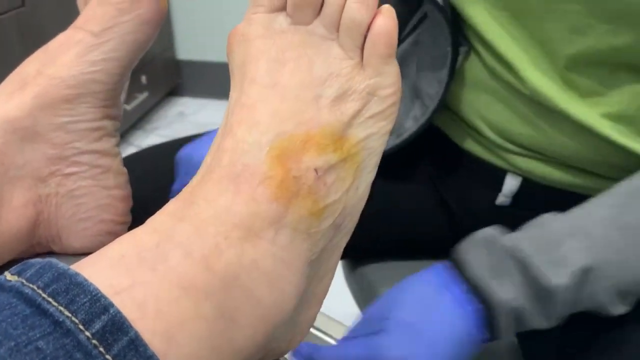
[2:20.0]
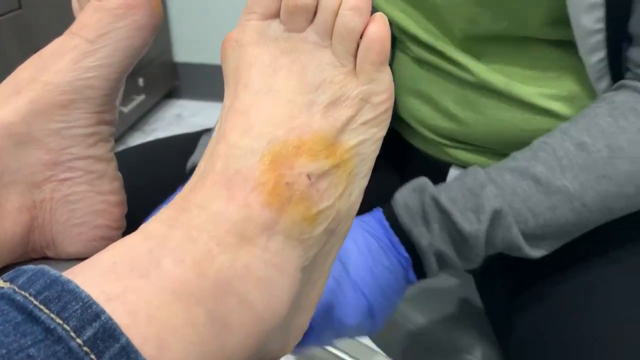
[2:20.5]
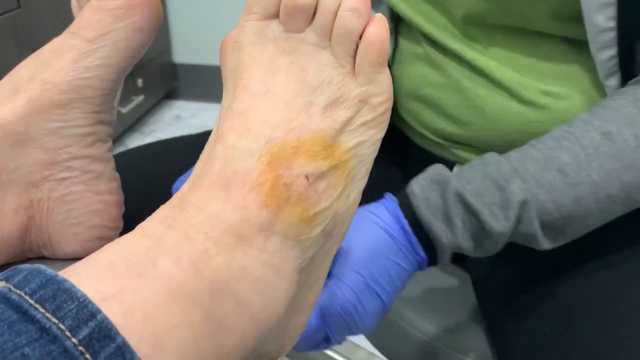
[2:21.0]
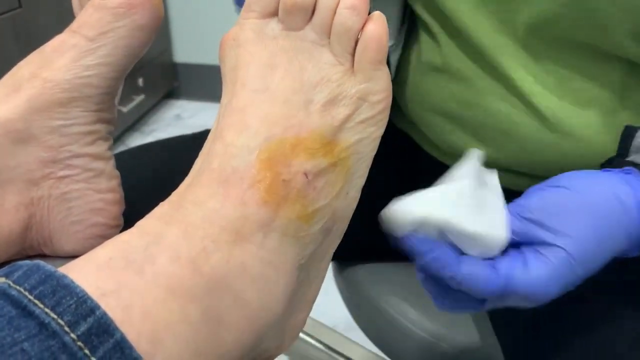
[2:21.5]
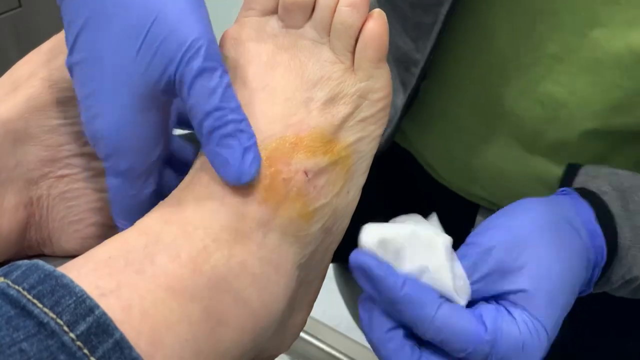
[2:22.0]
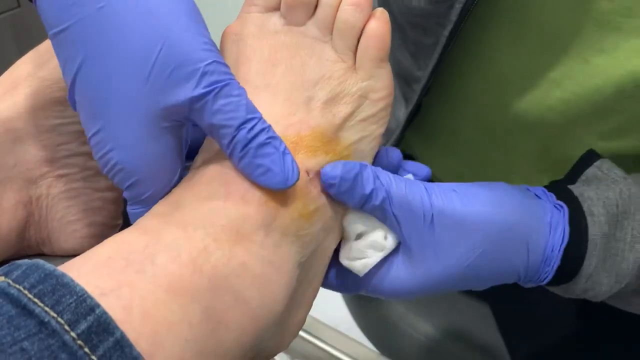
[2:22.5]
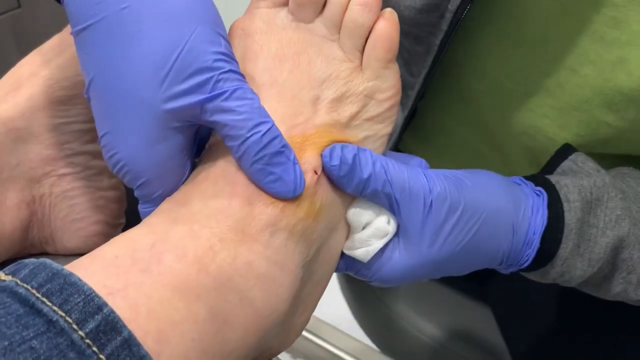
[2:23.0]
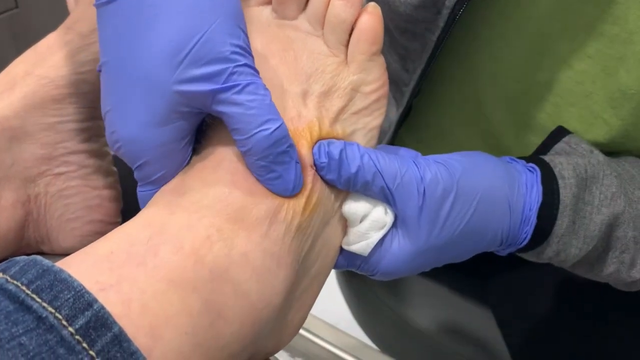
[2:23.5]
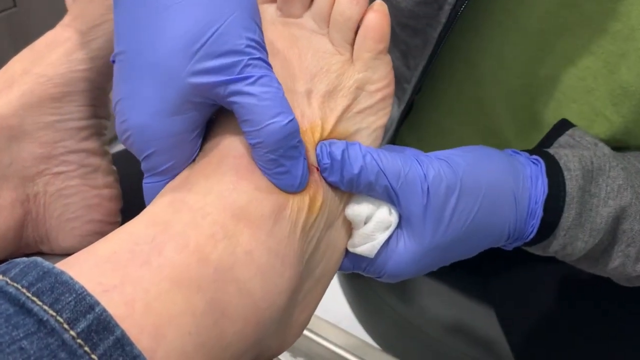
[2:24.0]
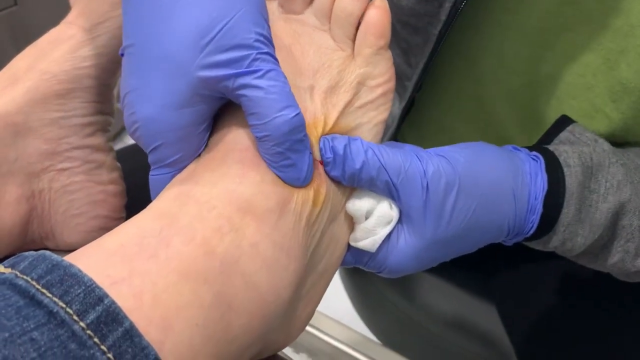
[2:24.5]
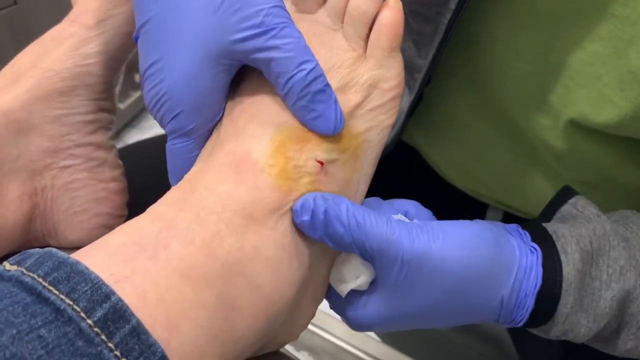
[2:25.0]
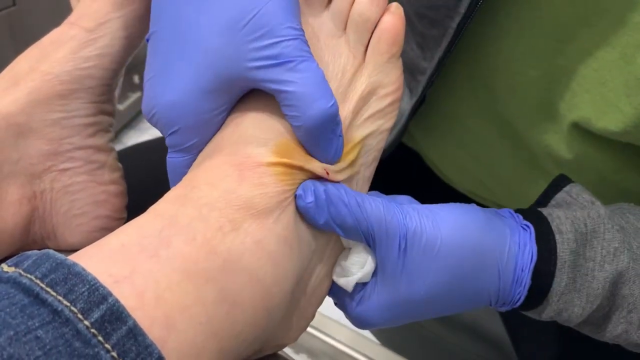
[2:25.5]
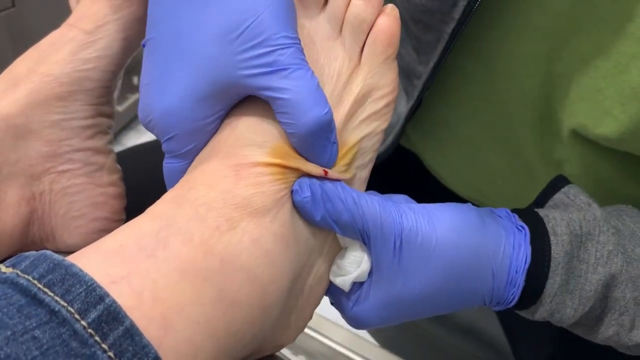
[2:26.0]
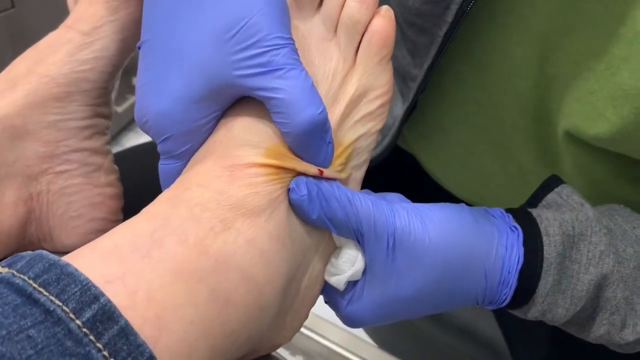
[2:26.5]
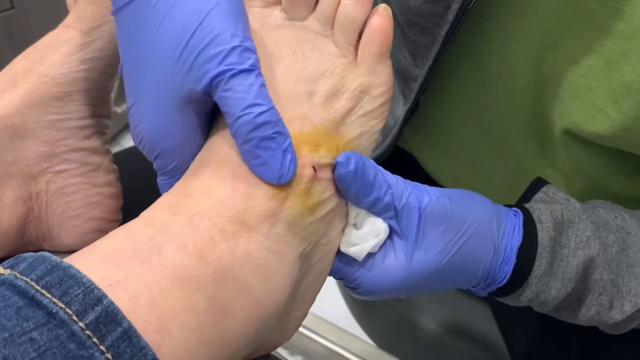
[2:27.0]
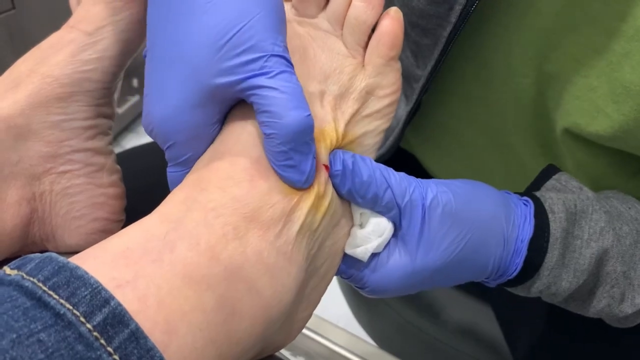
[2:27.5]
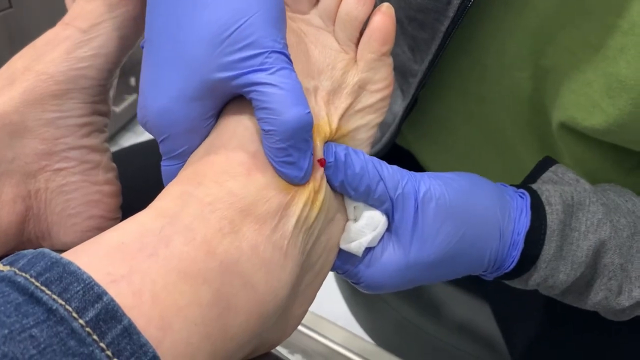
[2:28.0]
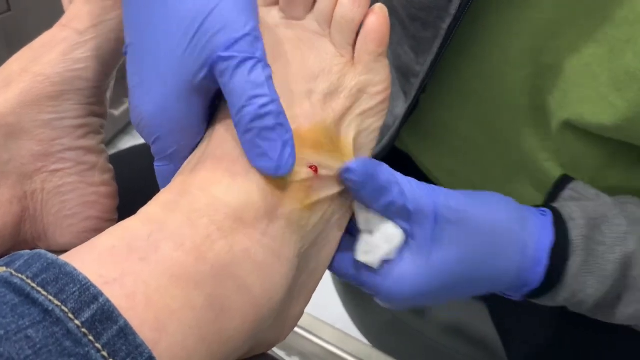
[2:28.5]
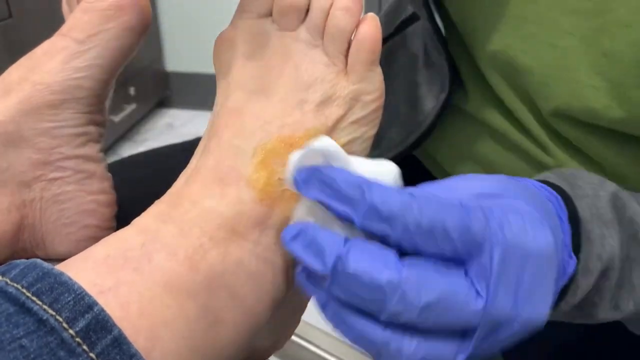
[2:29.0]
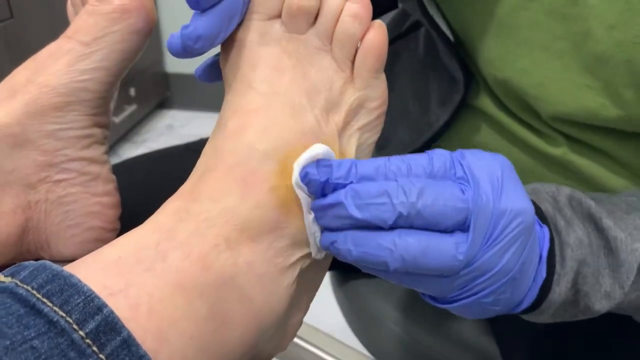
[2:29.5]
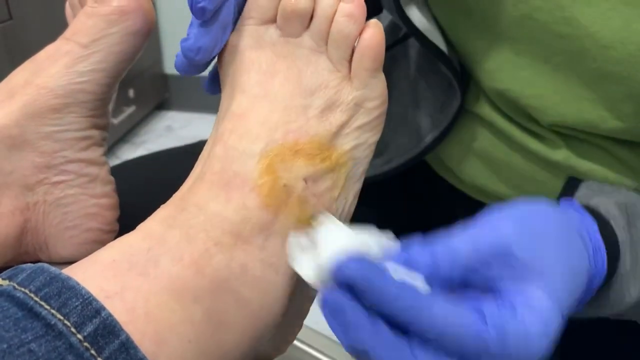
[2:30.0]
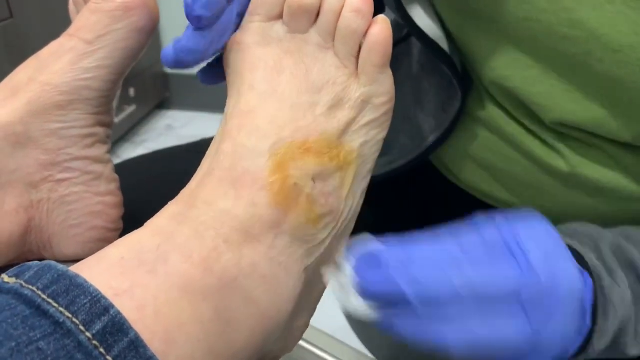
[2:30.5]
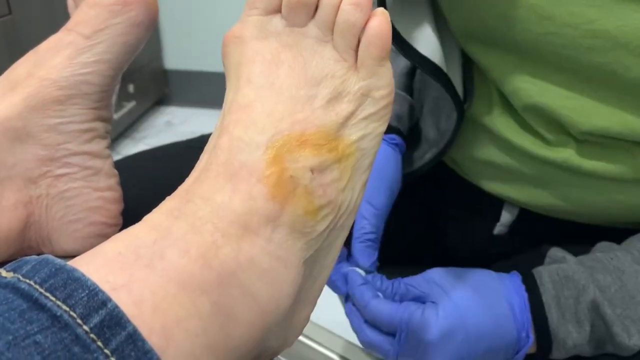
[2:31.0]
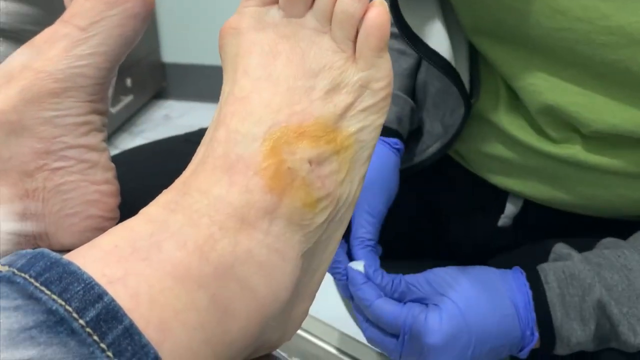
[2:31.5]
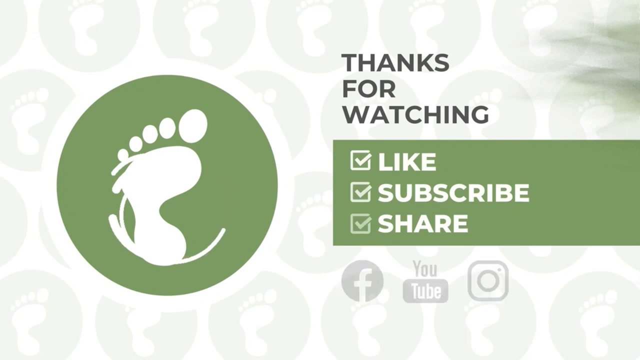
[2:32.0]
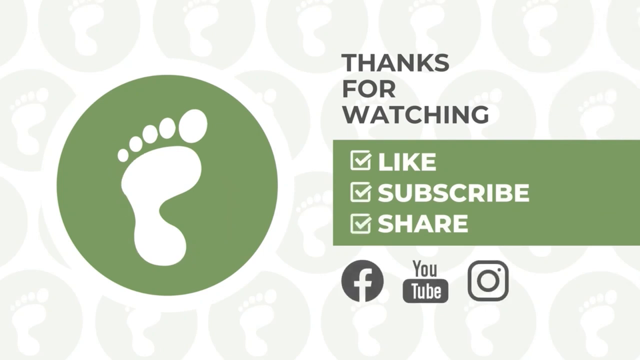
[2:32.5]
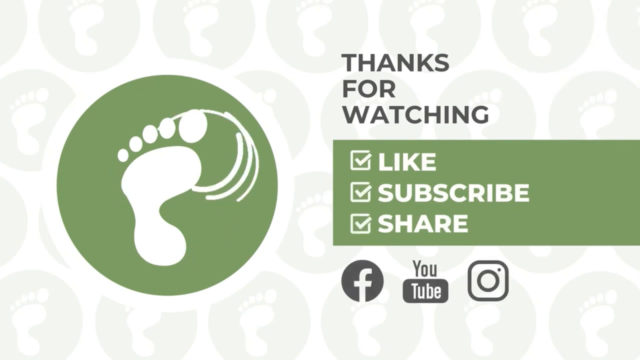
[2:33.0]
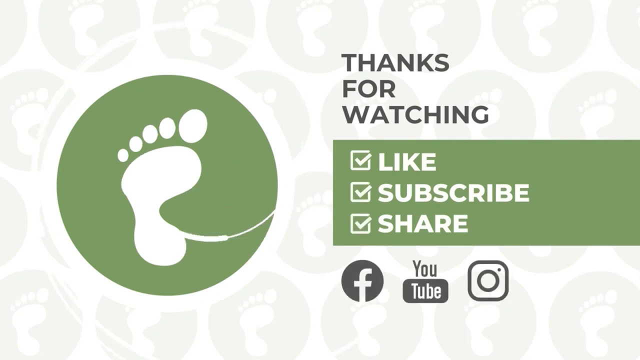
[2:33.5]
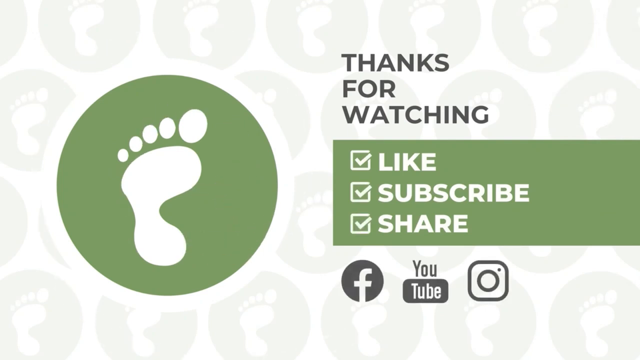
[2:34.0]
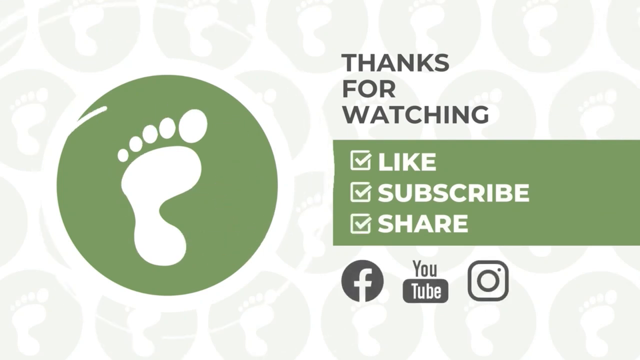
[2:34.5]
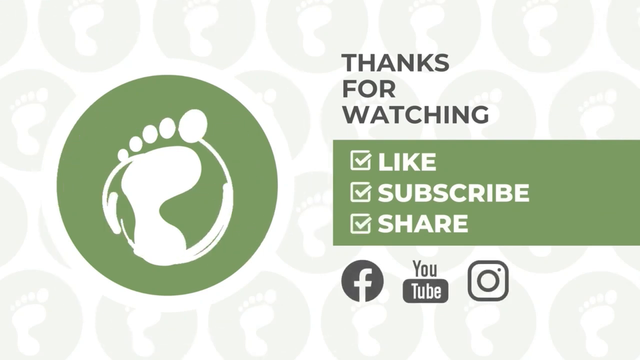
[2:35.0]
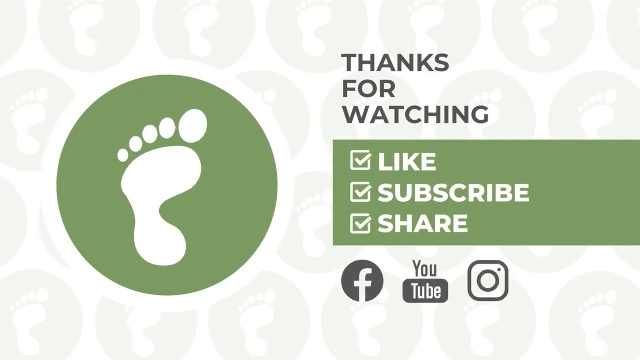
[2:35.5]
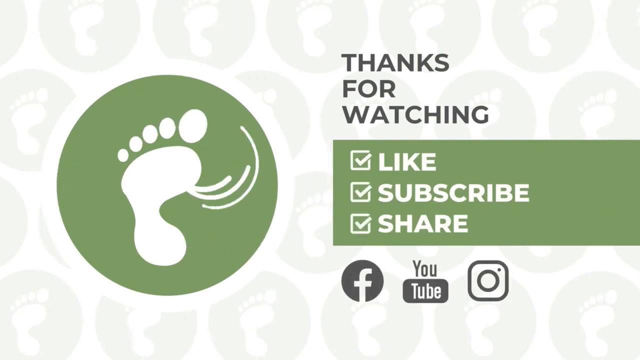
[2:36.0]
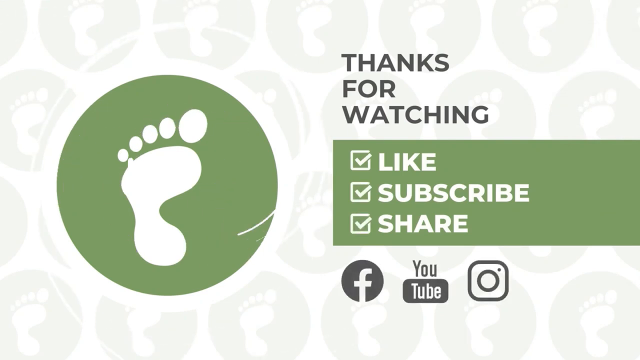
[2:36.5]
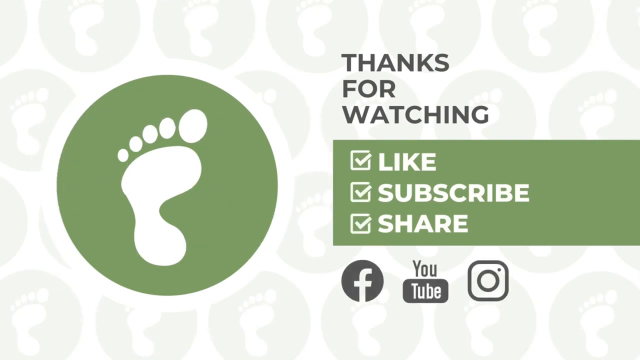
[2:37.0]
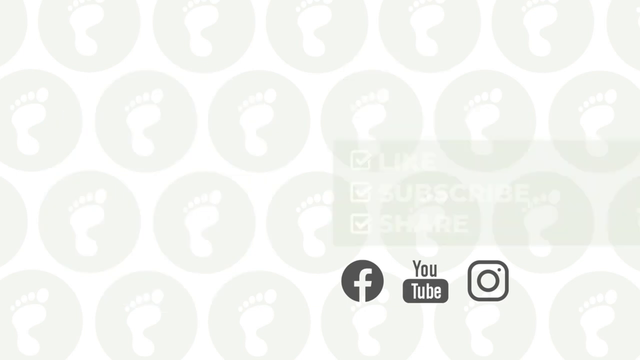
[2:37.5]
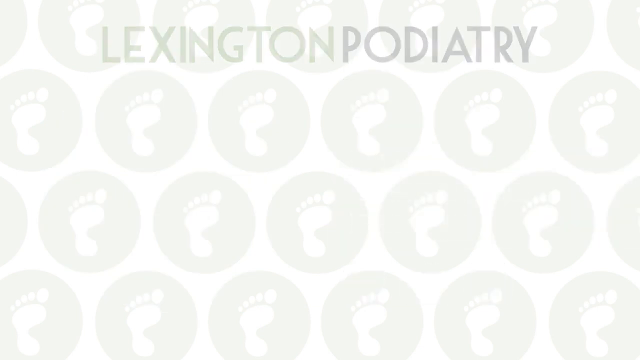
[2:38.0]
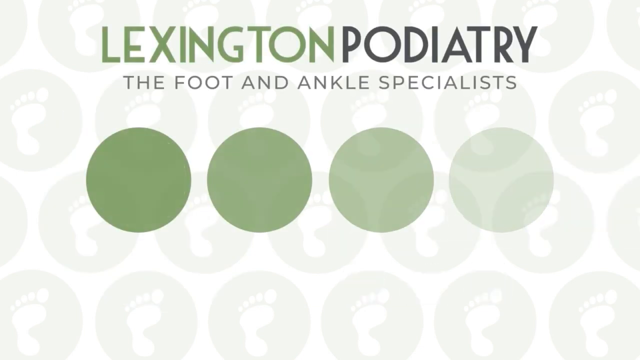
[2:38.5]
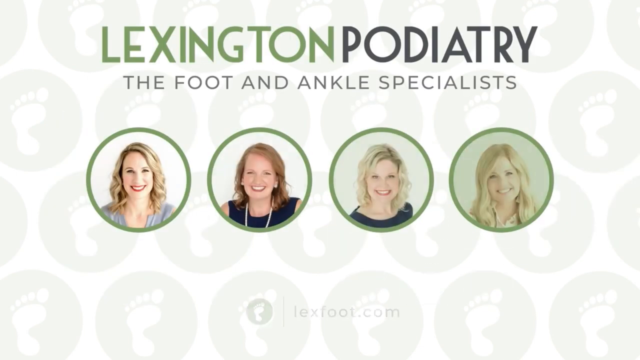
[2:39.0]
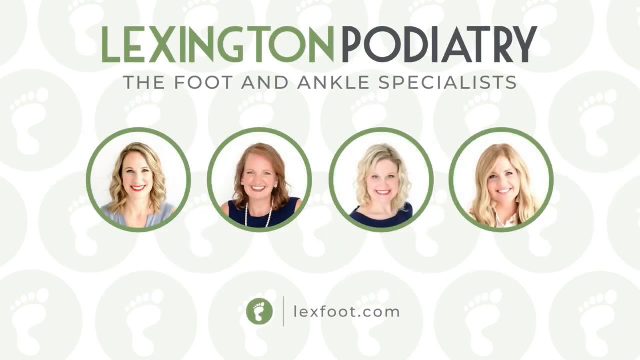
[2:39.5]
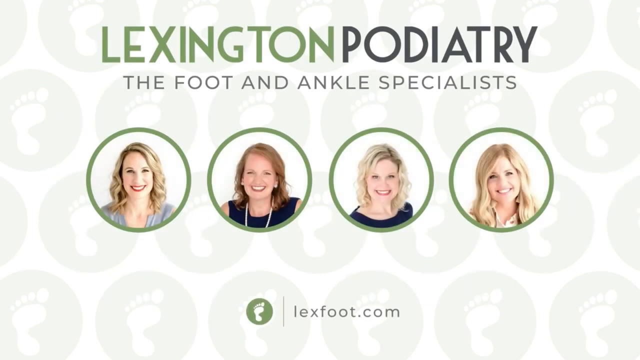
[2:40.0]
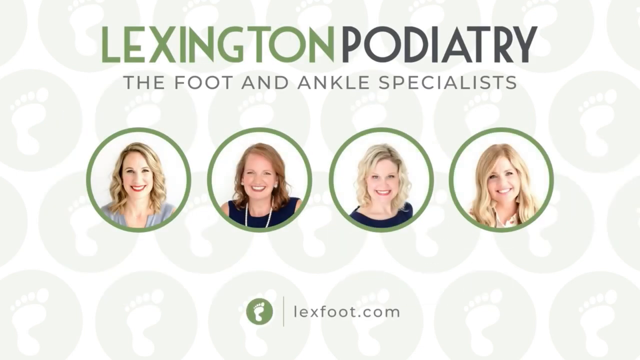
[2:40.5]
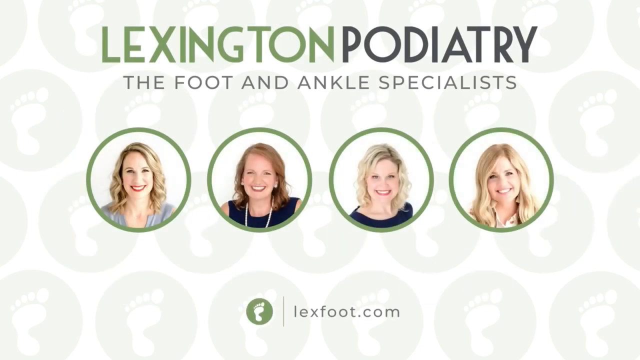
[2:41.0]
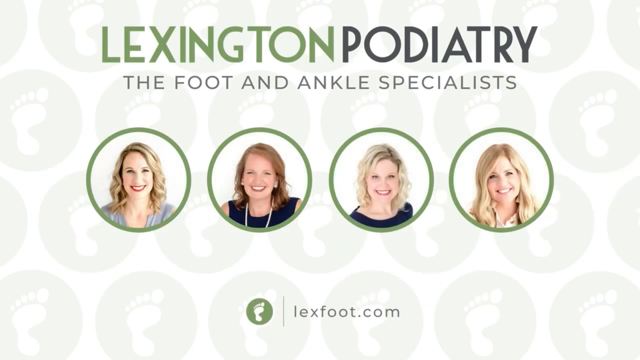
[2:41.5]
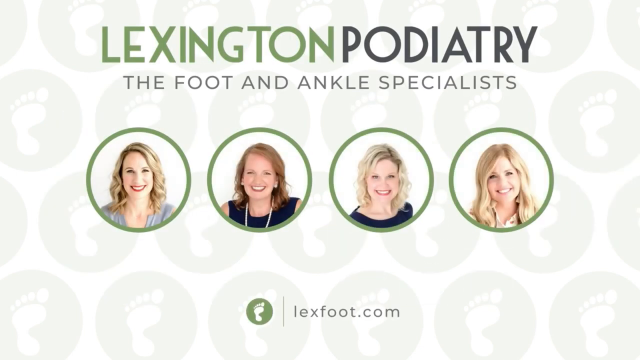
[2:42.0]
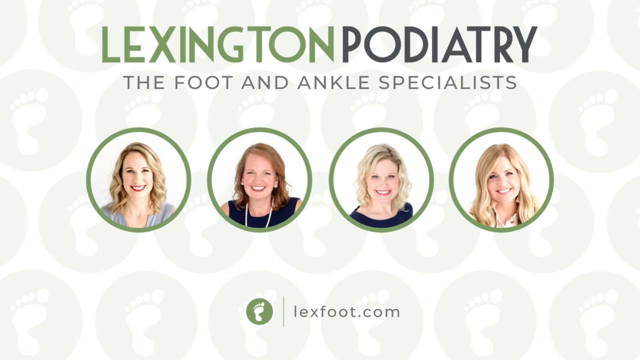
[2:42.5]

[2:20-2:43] On the top of the patient's right foot there is an affected area. The podiatrist, wearing gloves, uses a napkin to brush off the goop coming from the top of the foot. Then the text "Lexington Podiatry" and "the foot and ankle specialists" appears, and several women are shown on the screen. Both the podiatrist and the patient are Caucasian, and both feet are white. The setting is a podiatry office.